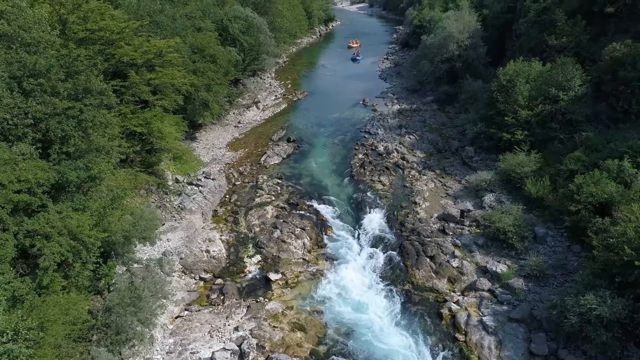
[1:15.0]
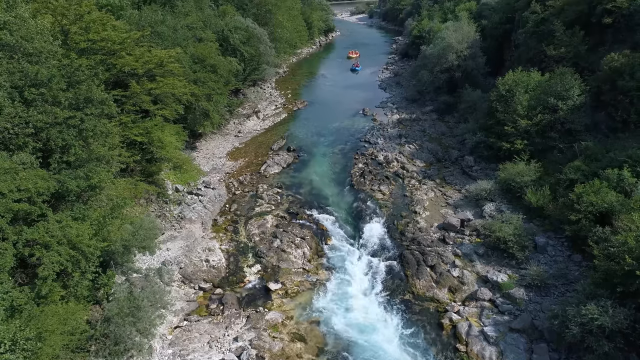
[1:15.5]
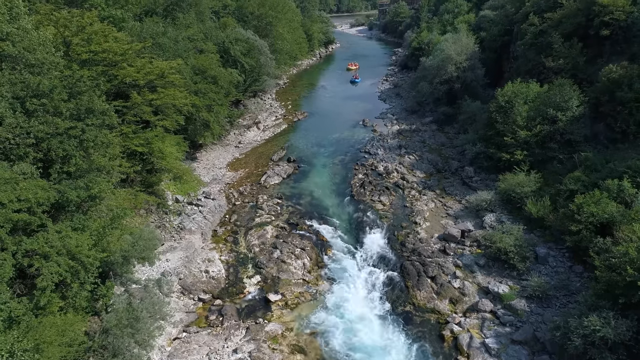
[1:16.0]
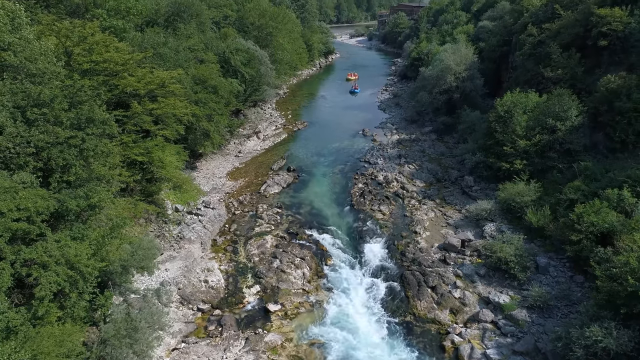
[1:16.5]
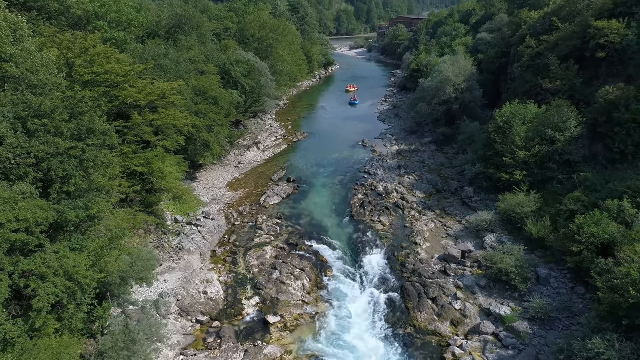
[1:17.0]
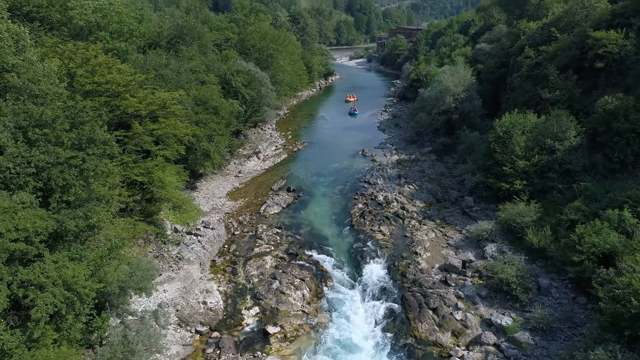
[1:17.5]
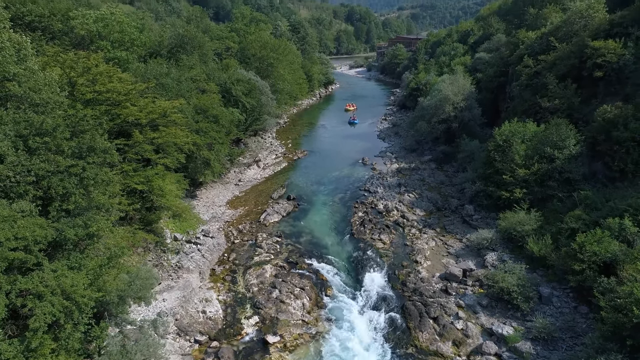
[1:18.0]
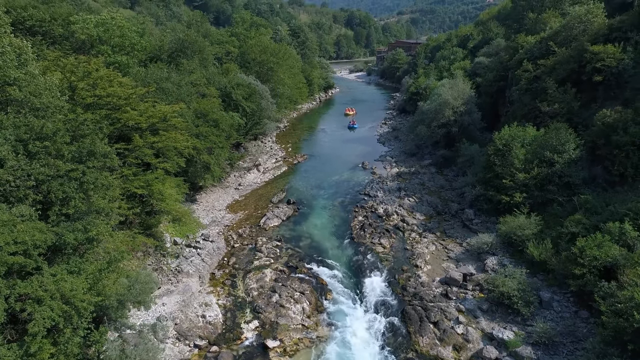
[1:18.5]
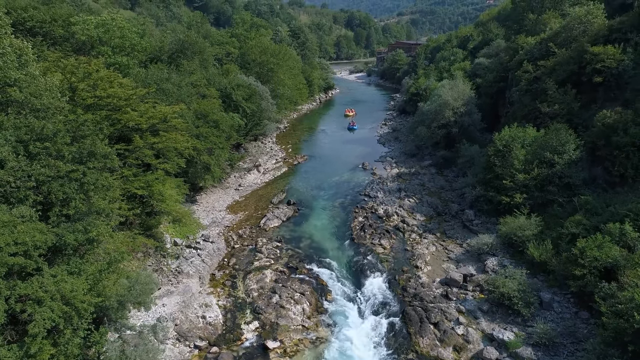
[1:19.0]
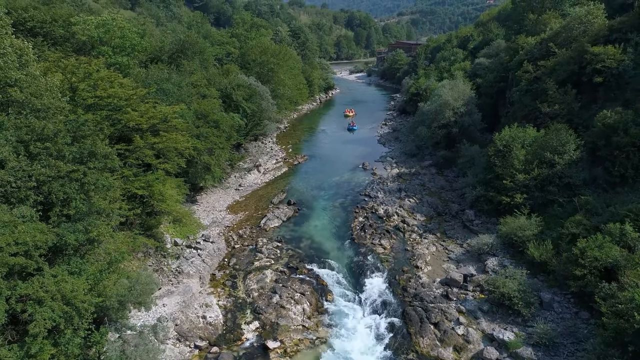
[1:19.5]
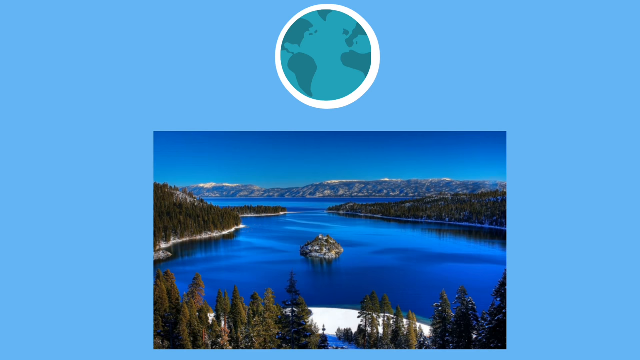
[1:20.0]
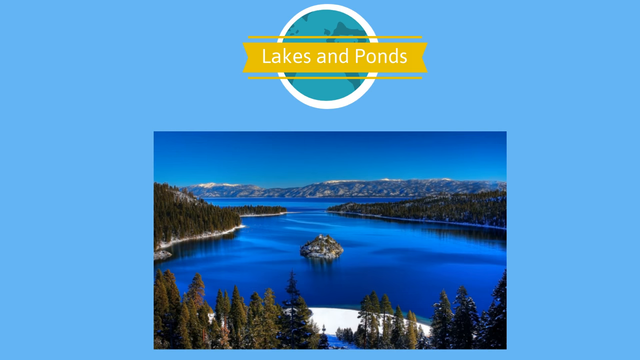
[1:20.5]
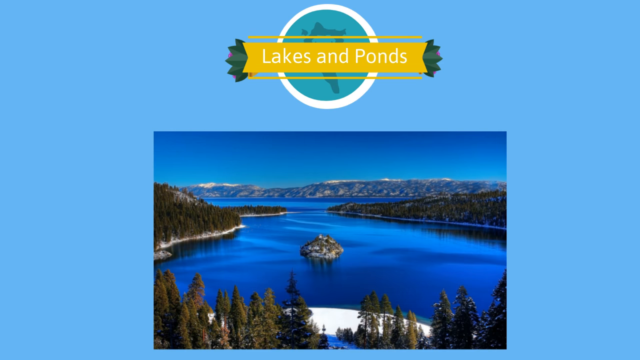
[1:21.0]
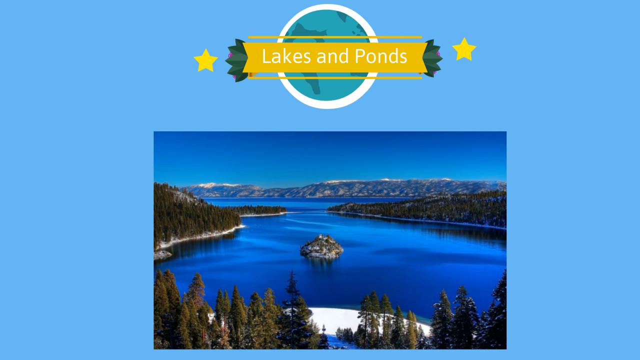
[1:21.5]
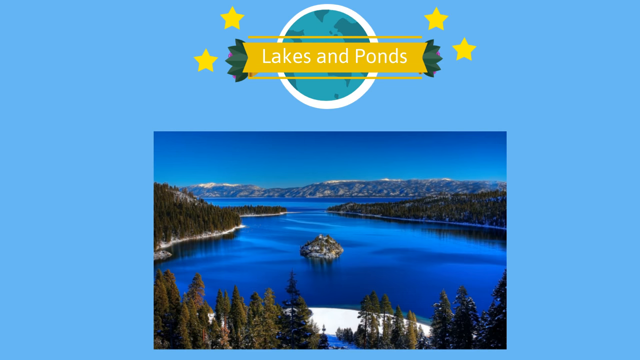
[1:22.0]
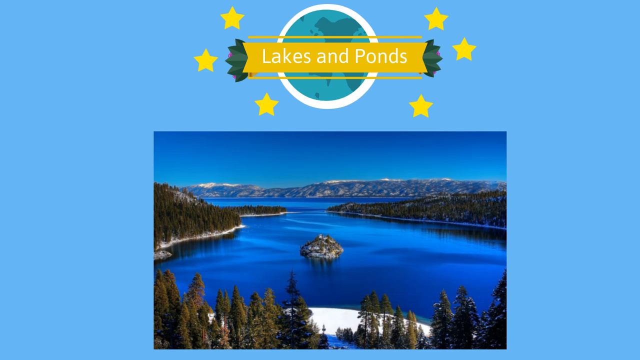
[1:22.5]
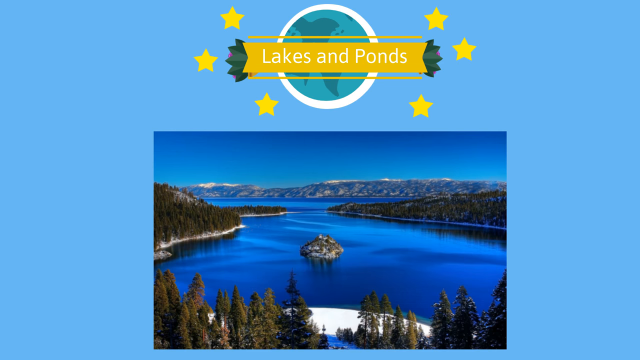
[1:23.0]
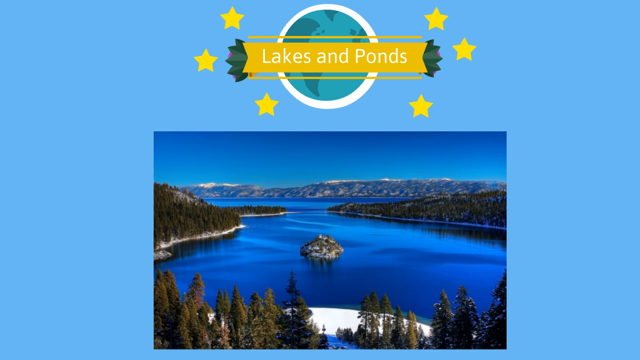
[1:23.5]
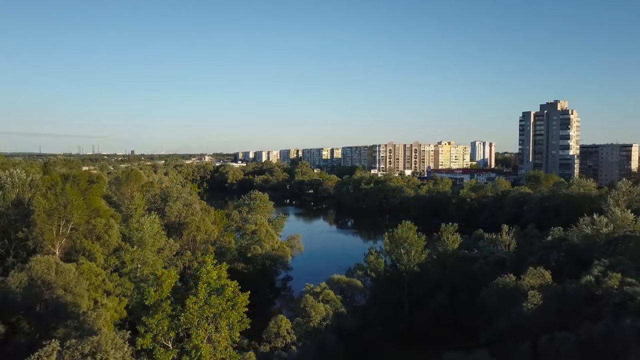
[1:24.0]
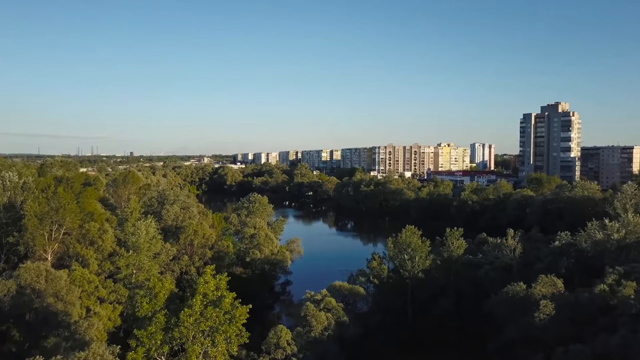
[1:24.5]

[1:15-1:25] A river with white rushing water flows against big stones. Blue water appears with a cityscape of tall buildings in the background. Lush greenery, very tall pine trees and vegetation are alongside the river, lake or stream. Dark water is amongst big, large trees, and there are islands in the water. Some of the scenes have a little snow cover. People float down the river in a rubber raft and appear to be enjoying themselves. One scene has a milky blue sky rather than a dark blue one; another has a very blue sky and looks like wilderness.